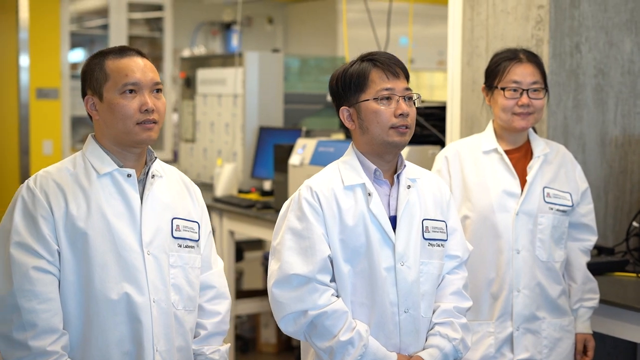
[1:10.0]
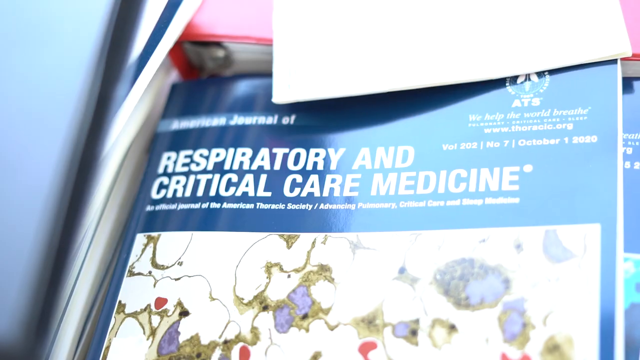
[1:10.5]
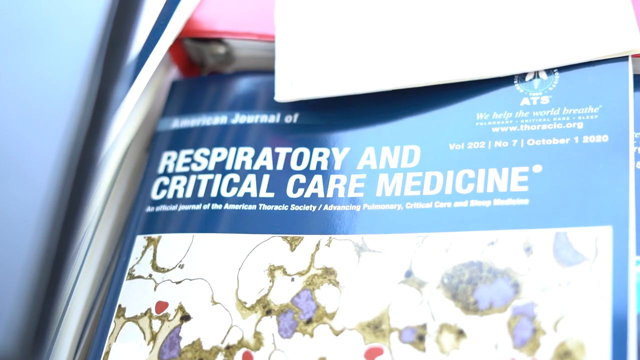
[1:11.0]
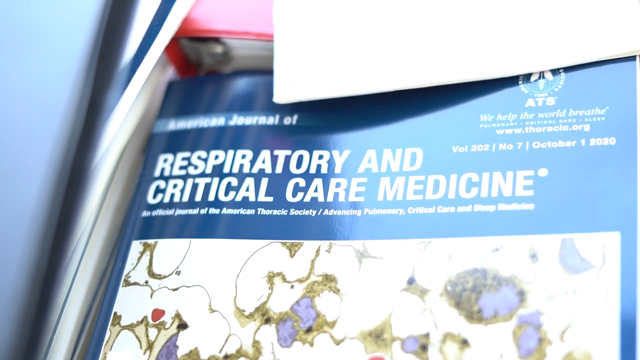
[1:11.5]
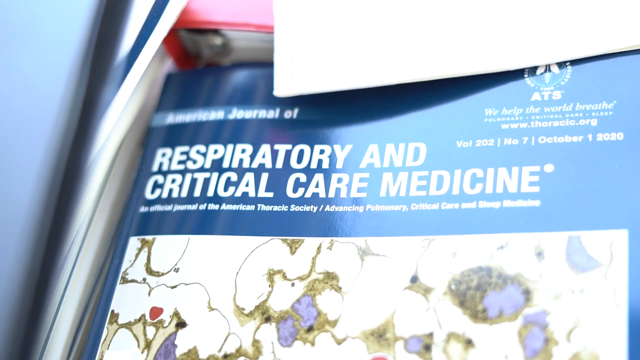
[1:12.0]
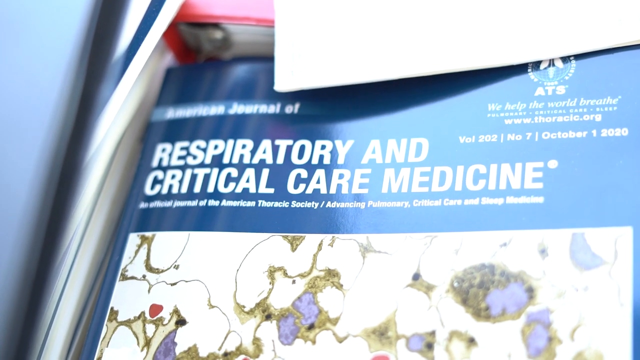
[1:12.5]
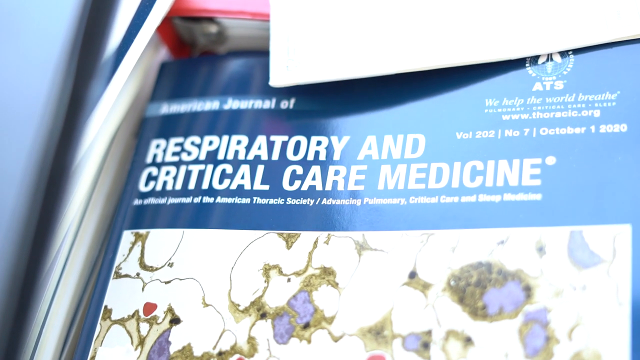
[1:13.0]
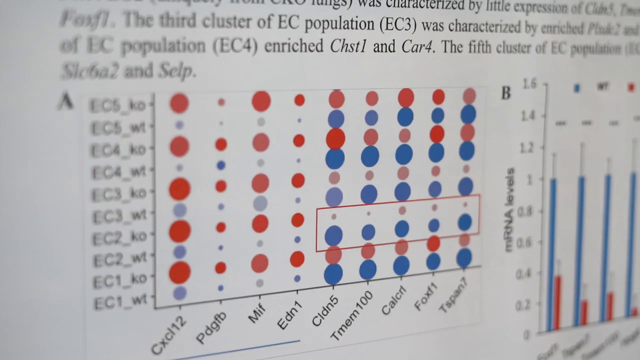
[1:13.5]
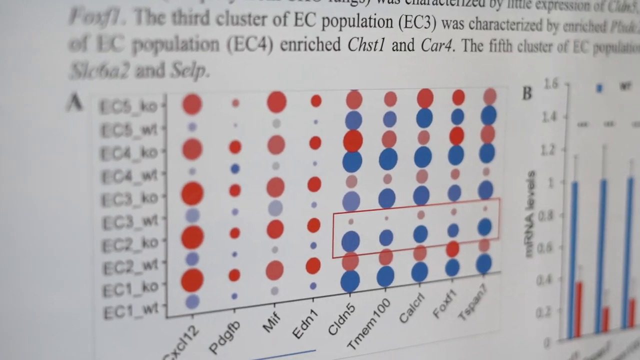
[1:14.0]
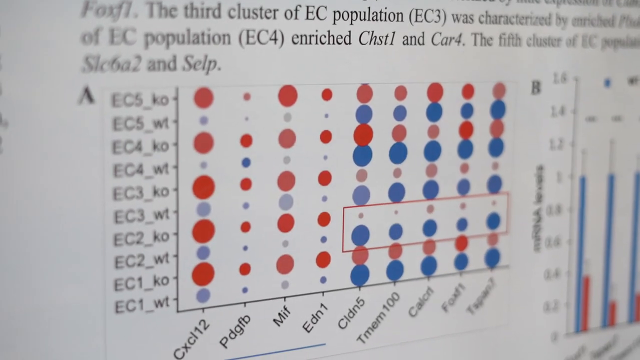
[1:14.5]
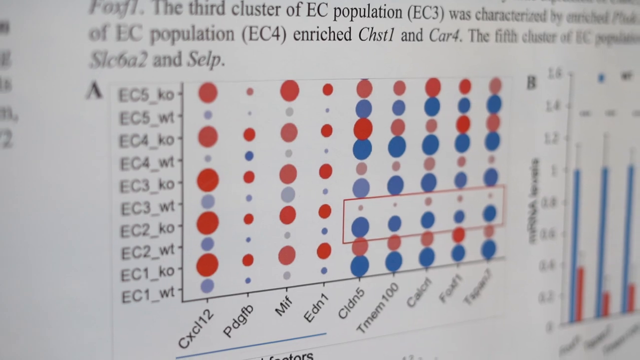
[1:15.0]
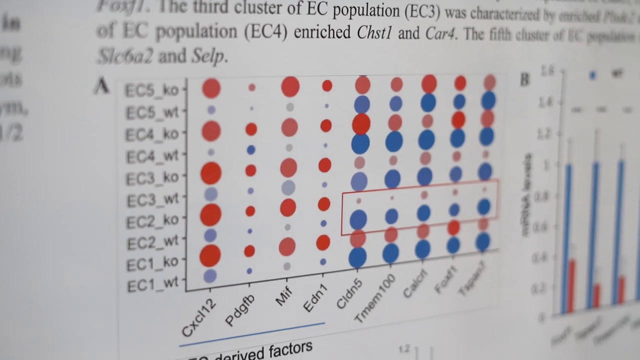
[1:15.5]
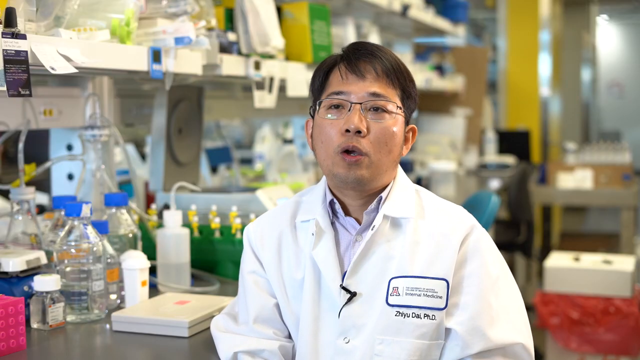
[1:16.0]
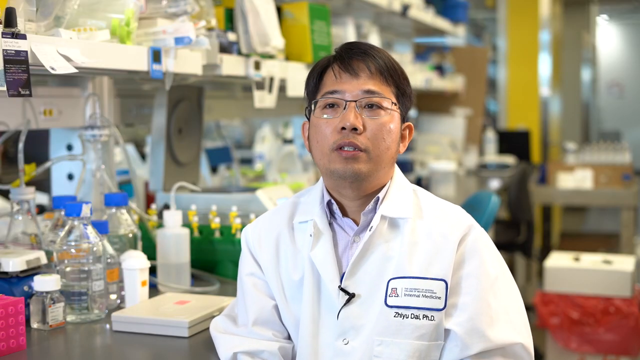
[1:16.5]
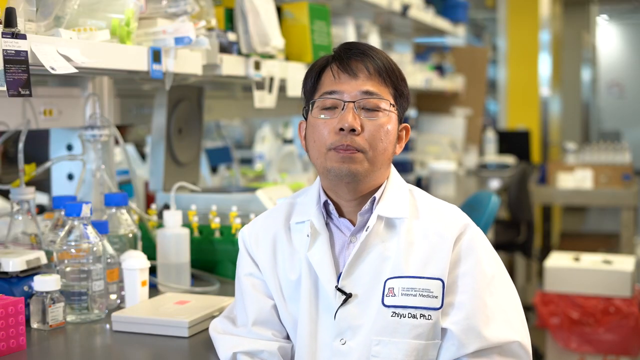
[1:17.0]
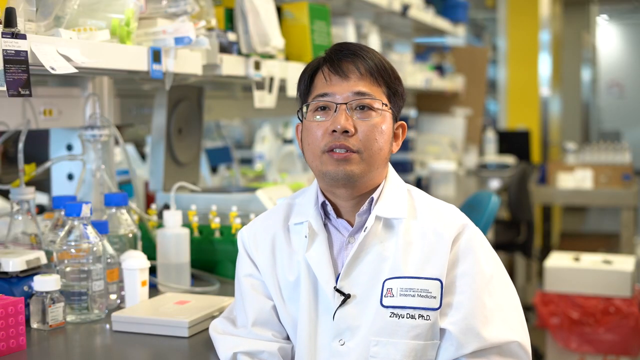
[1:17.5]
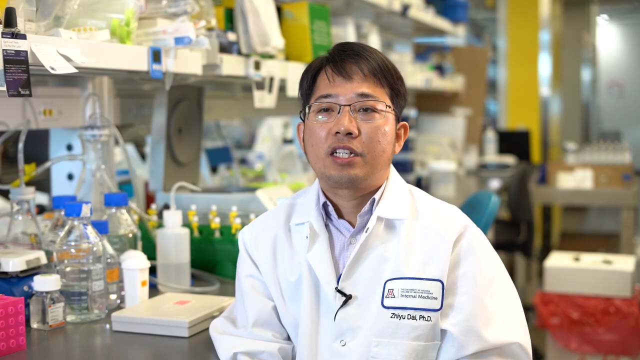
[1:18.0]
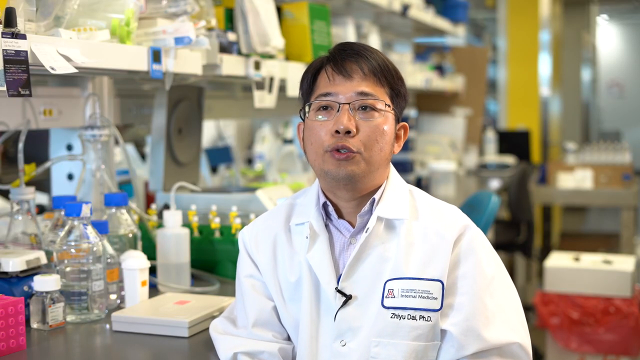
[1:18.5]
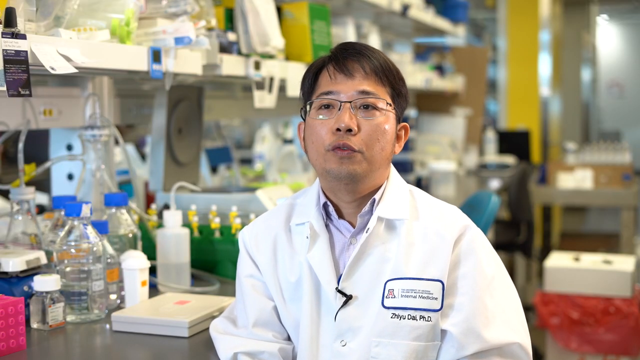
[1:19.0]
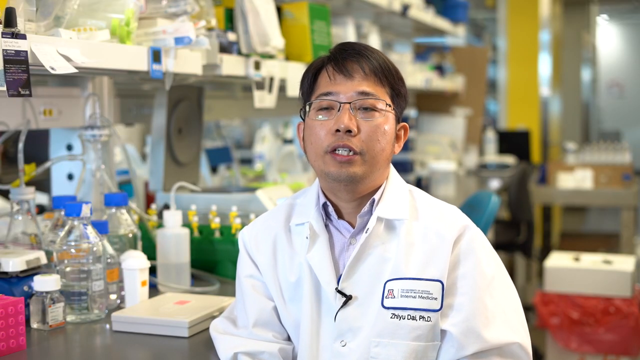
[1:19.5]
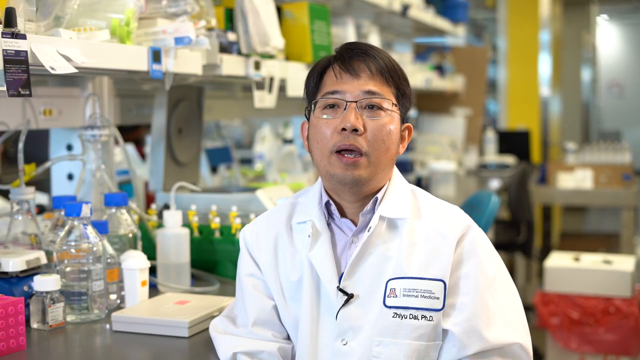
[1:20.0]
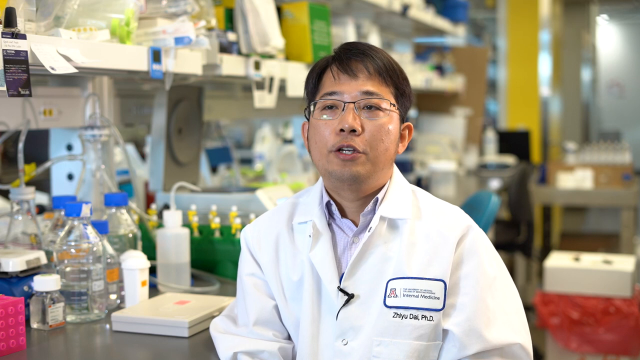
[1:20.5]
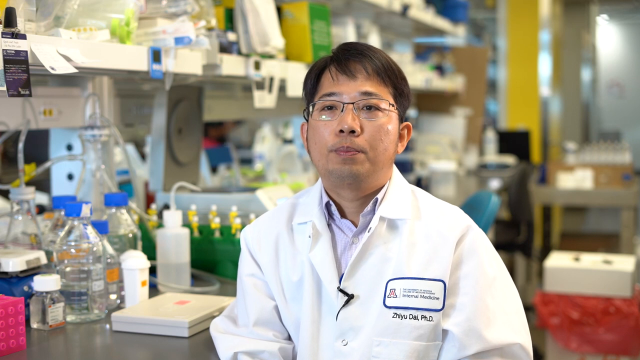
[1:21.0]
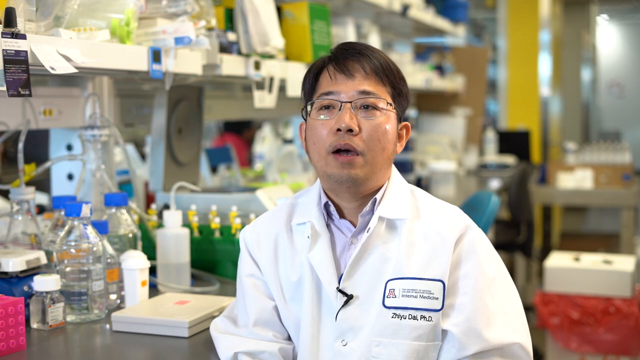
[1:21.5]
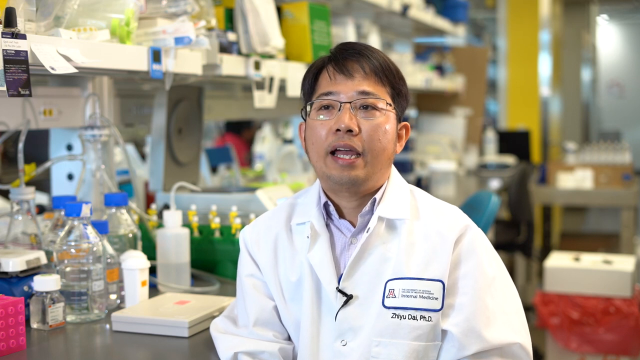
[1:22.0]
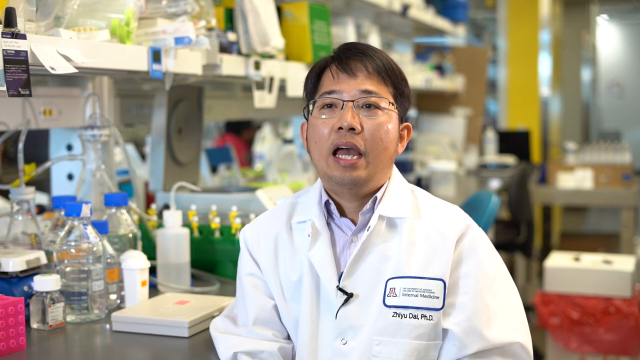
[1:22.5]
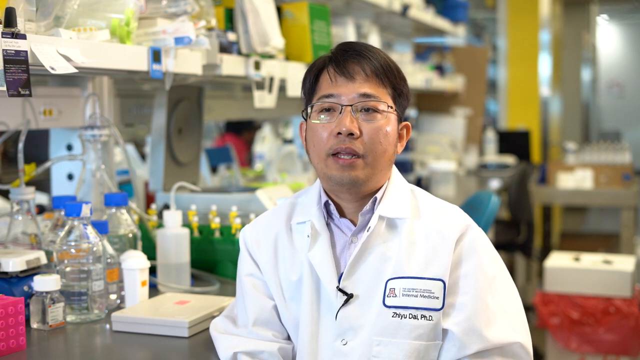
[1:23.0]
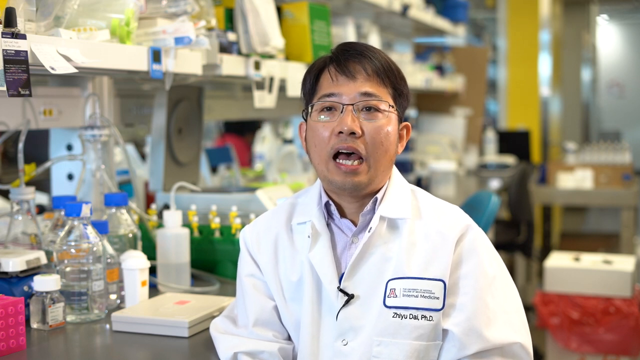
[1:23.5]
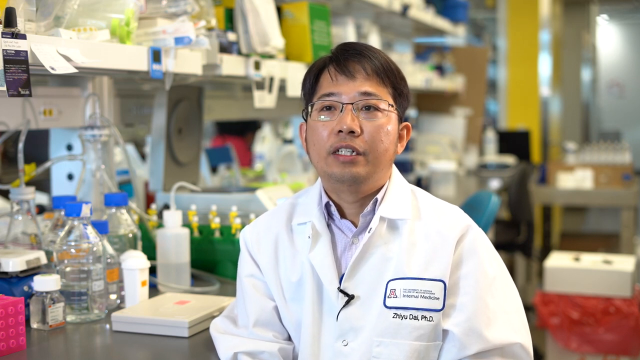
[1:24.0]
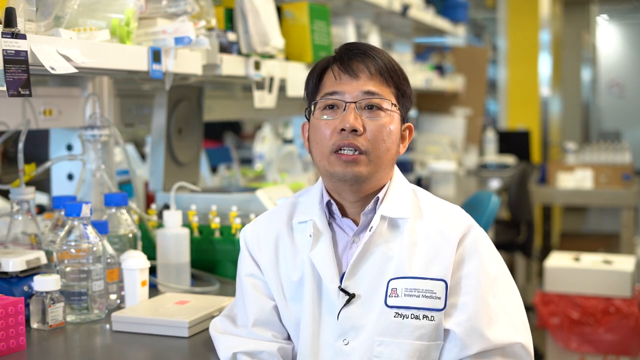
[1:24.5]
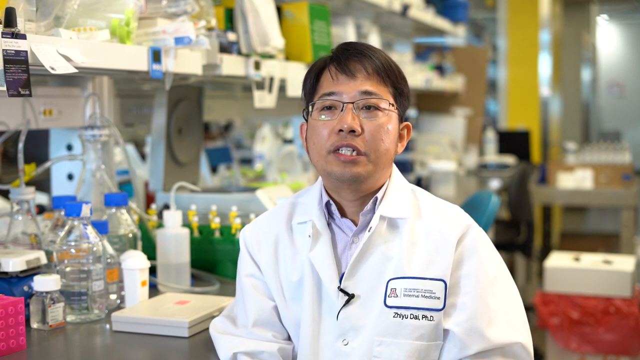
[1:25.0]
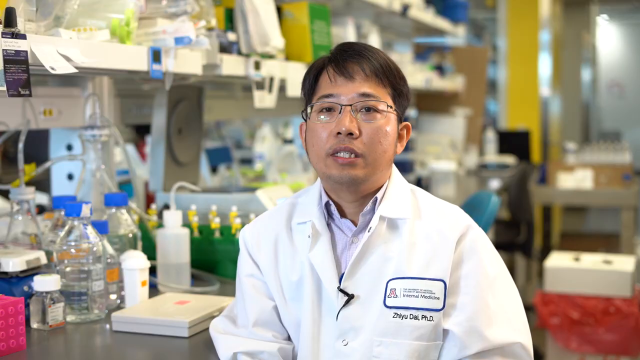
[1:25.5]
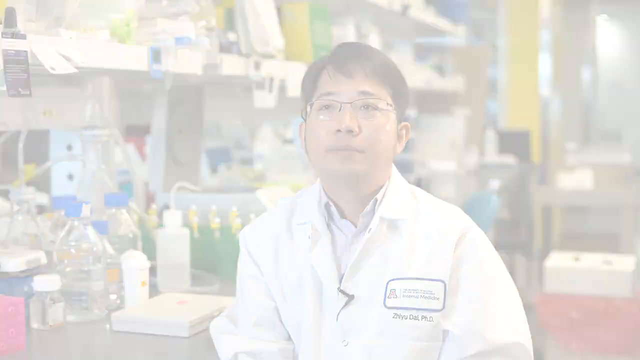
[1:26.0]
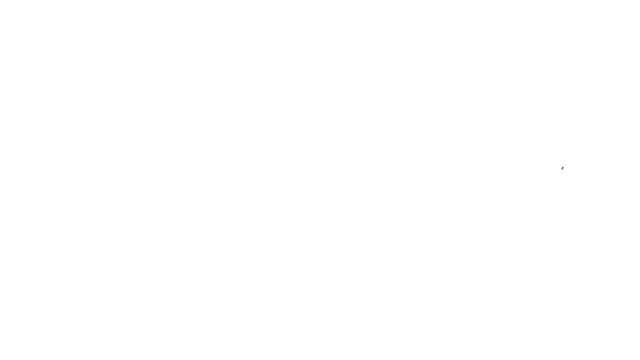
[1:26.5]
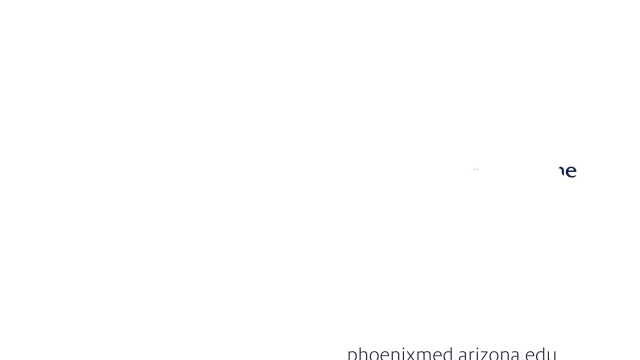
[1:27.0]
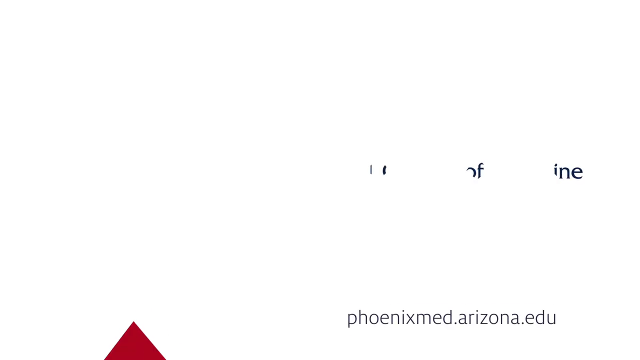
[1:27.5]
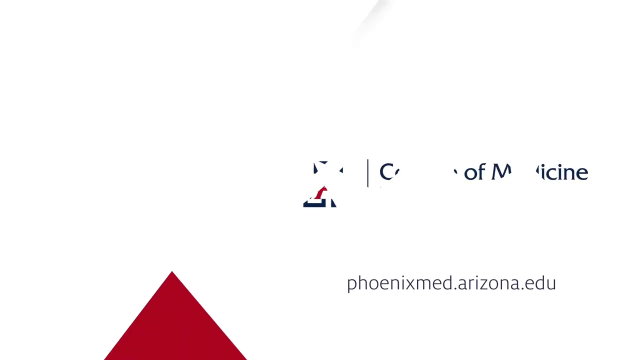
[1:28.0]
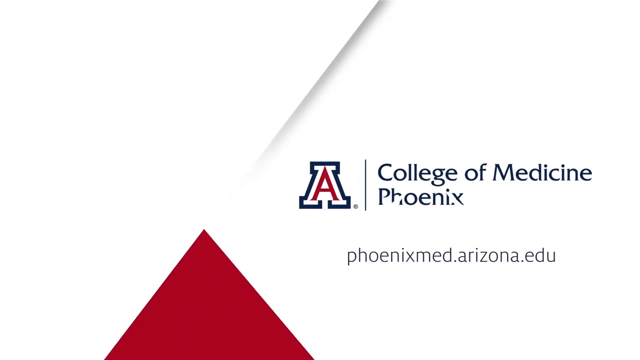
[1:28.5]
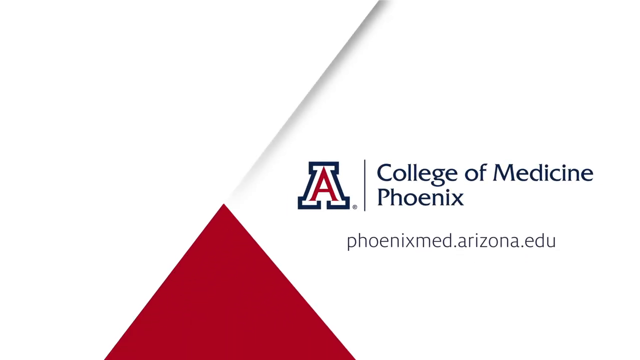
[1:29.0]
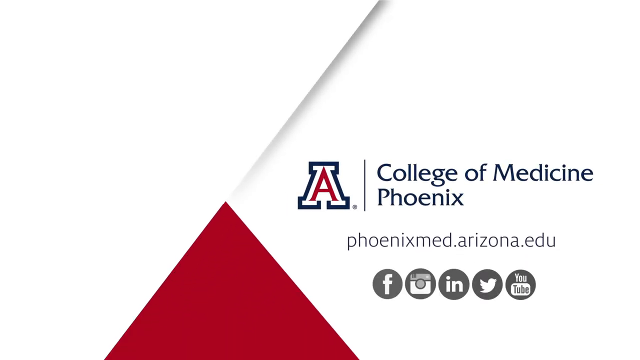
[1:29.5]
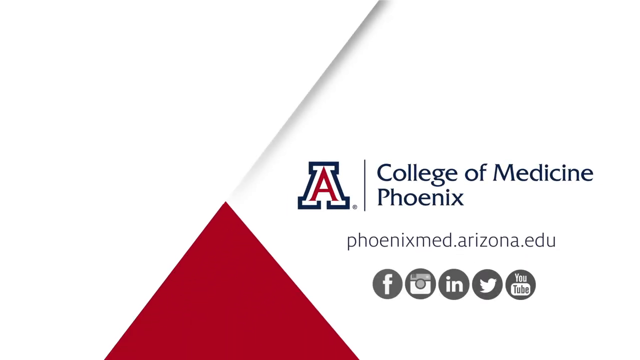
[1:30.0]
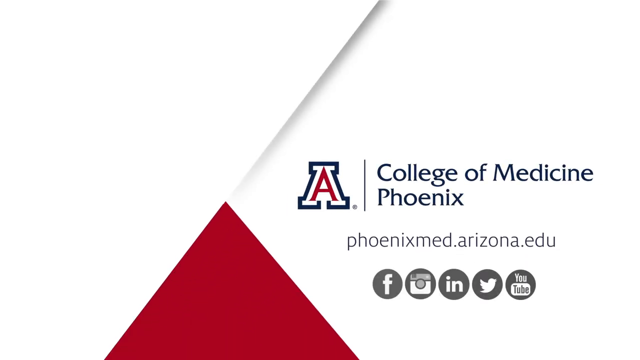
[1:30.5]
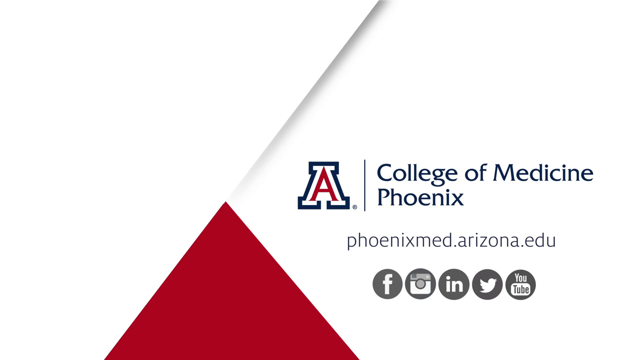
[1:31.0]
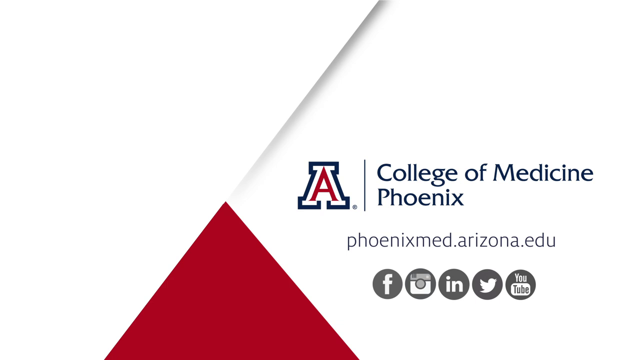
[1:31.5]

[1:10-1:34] A book called the American Journal of Respiratory and Critical Care Medicine is shown. On the upper right it states "We Help the World Breathe, www.thoracic.org, volume 202, number 7, October 1, 2020". A graph with purple, blue and red dots follows. Zhiyu Dai then sits at a desk being interviewed, wearing a white lab coat, a collared shirt and black glasses with thin frames; he is Asian with his hair swept to the left. Next to him are multiple shelves with various pieces of equipment and bottles and containers for lab work: clear containers with blue lids, green containers with yellow lids, and a clear bottle with a curved tip. Representative art then appears, with a red triangle pointing up in the middle of the screen and a red letter A outlined in blue, with white between the A and the outline. To the right, "College of Medicine, Phoenix" is written in blue, and under that "phoenixmed.arizona.edu" with logos for Facebook, Instagram, Indeed, Twitter and YouTube.